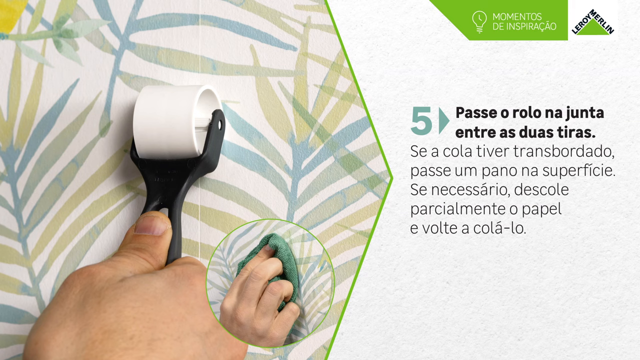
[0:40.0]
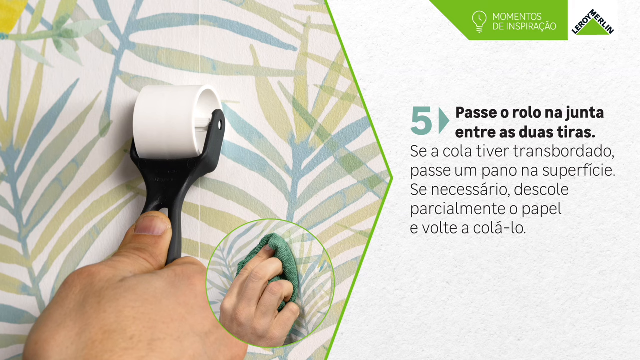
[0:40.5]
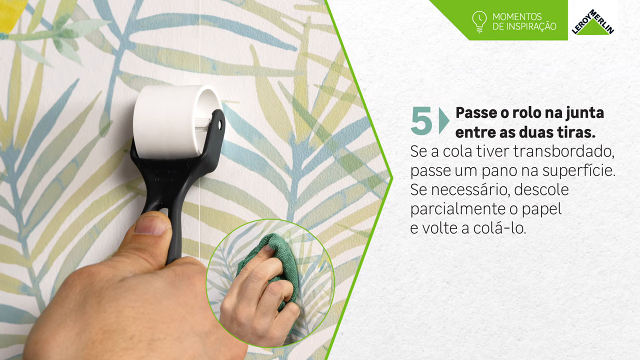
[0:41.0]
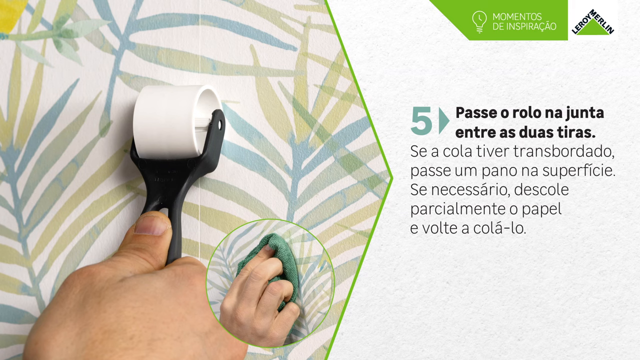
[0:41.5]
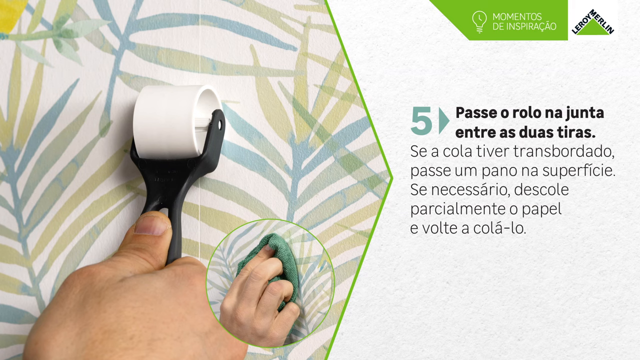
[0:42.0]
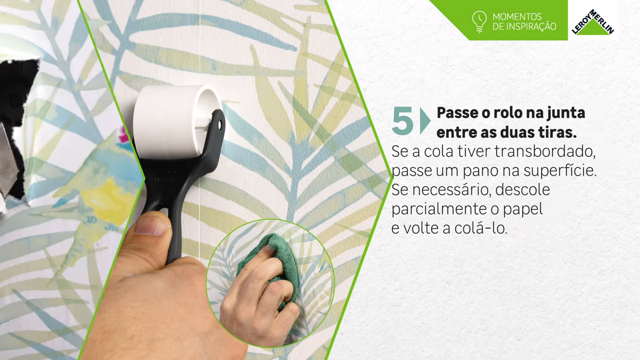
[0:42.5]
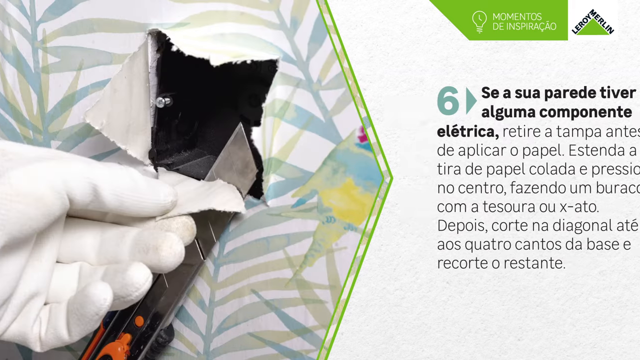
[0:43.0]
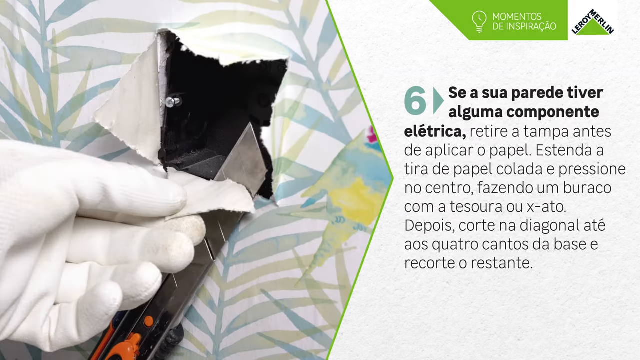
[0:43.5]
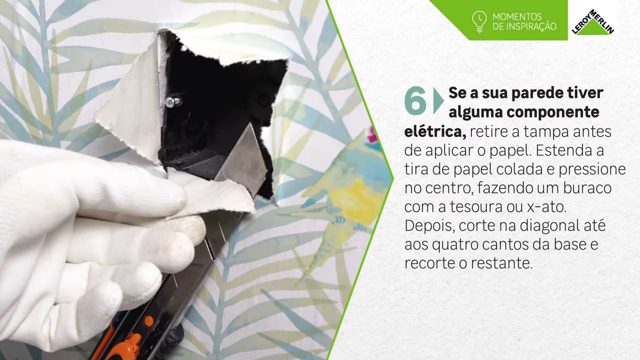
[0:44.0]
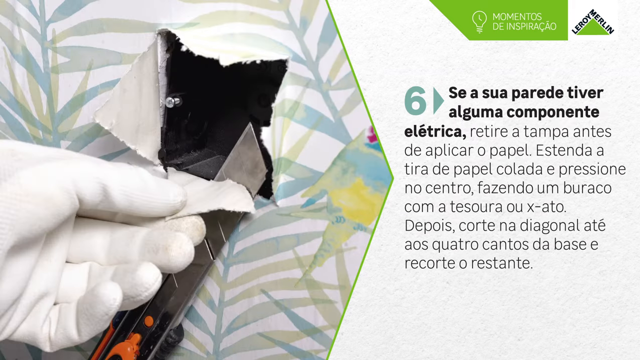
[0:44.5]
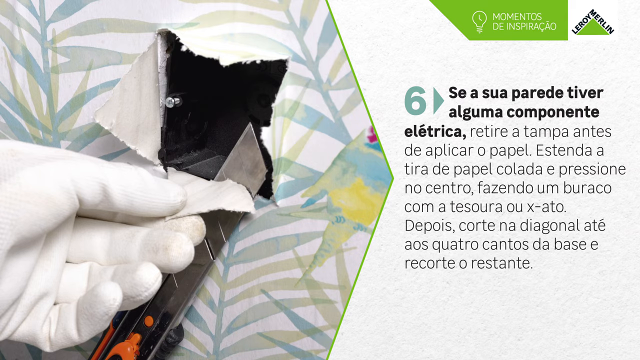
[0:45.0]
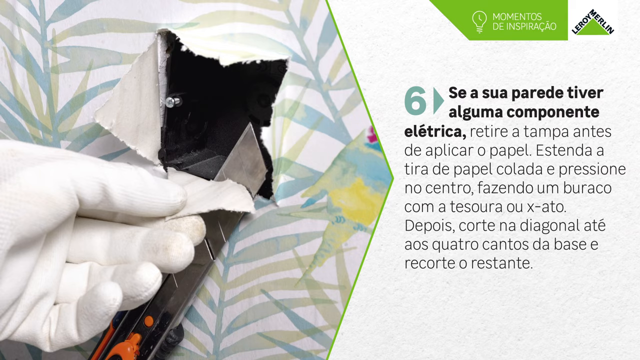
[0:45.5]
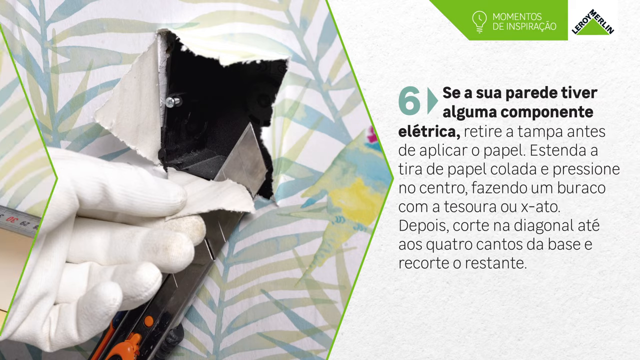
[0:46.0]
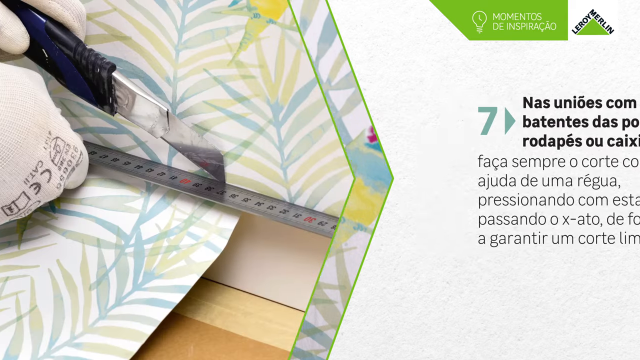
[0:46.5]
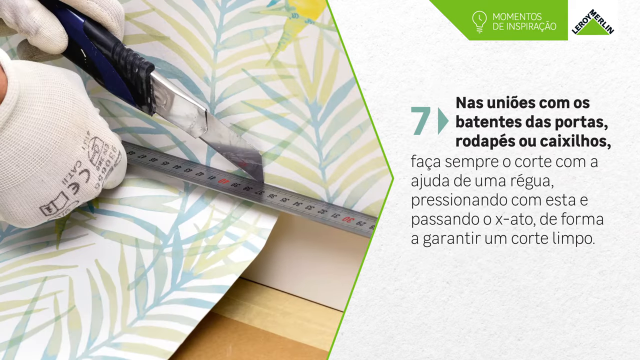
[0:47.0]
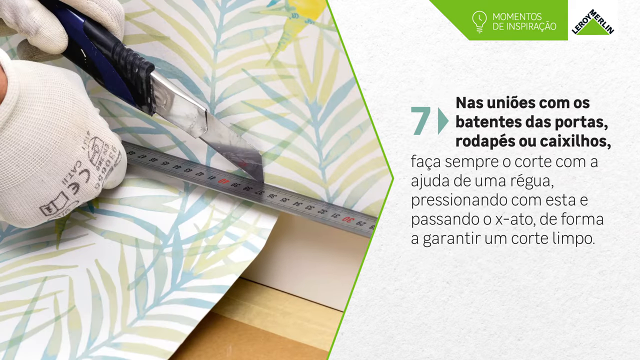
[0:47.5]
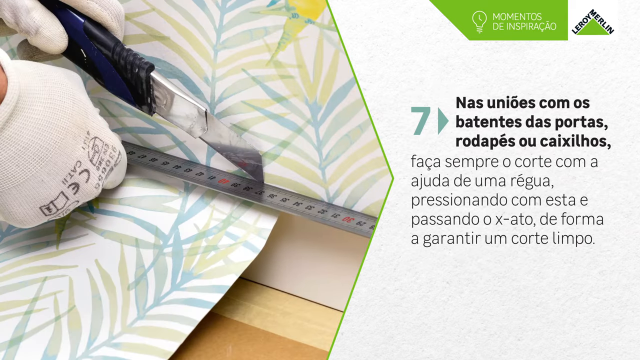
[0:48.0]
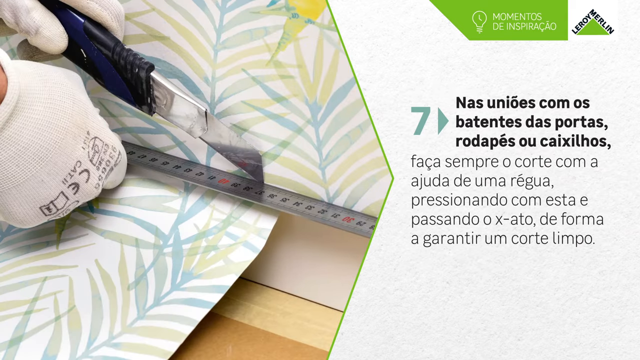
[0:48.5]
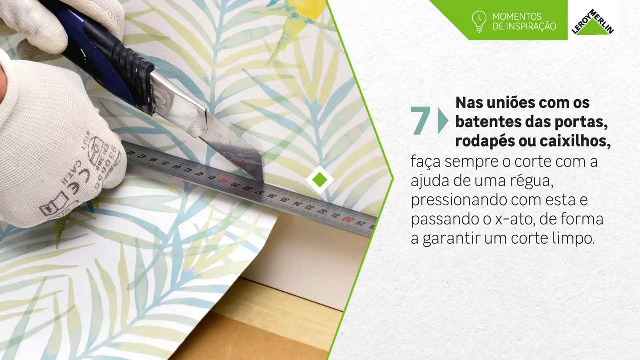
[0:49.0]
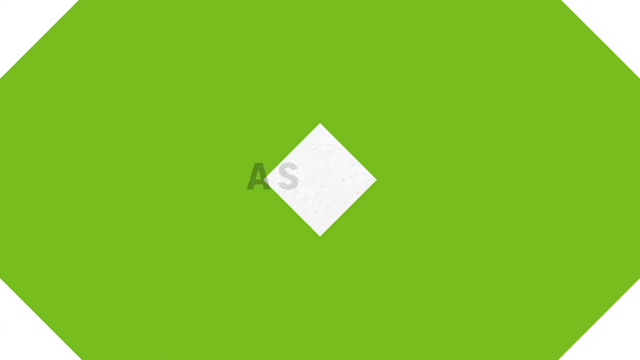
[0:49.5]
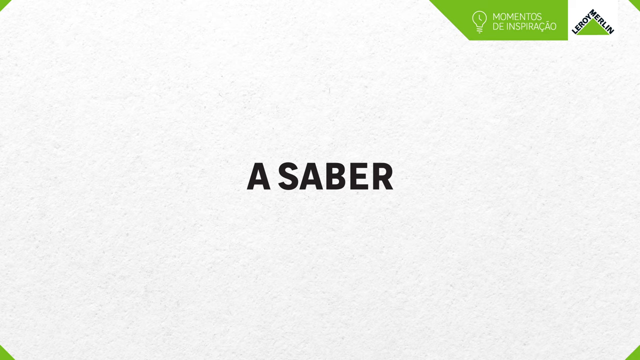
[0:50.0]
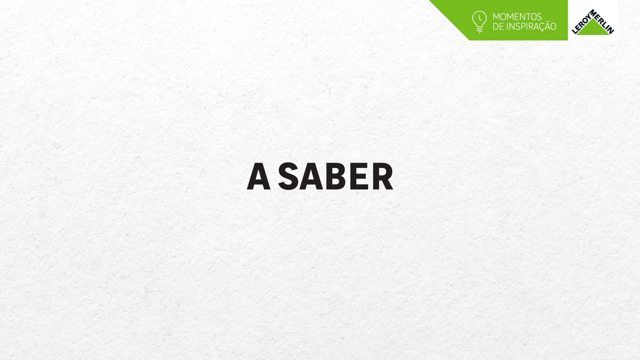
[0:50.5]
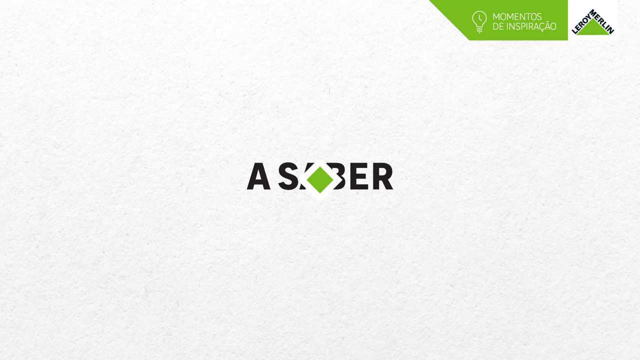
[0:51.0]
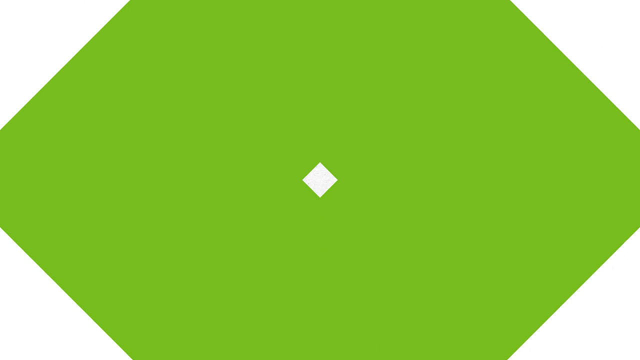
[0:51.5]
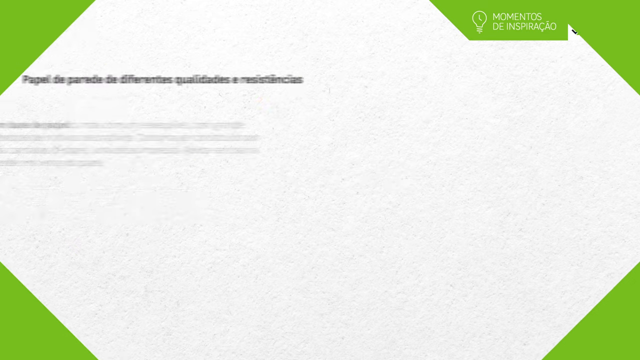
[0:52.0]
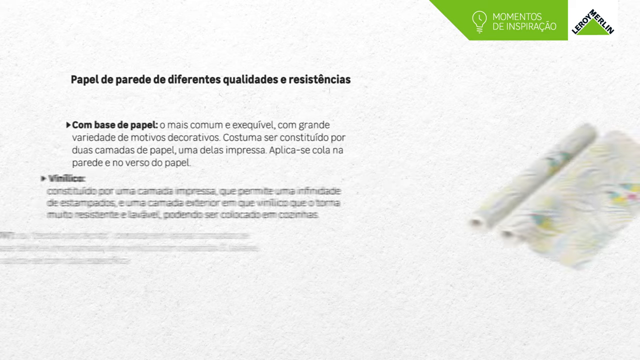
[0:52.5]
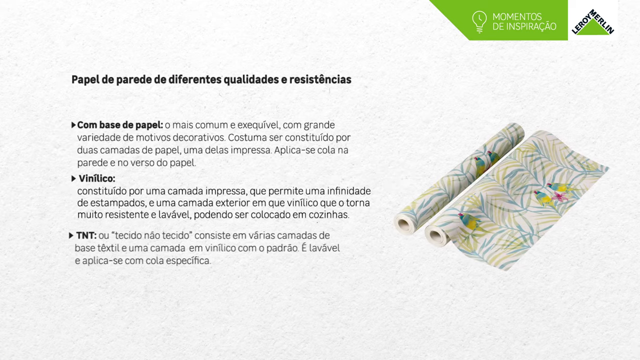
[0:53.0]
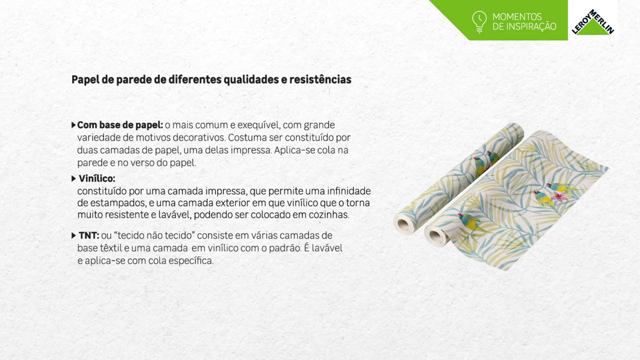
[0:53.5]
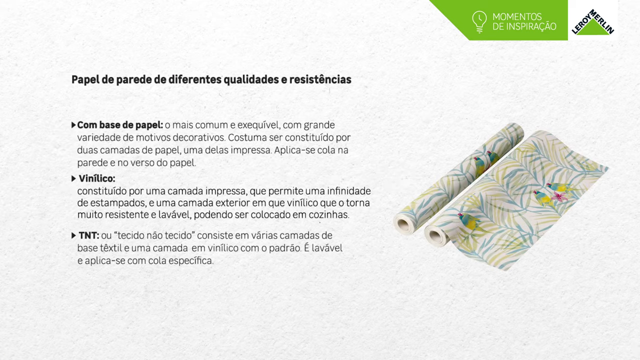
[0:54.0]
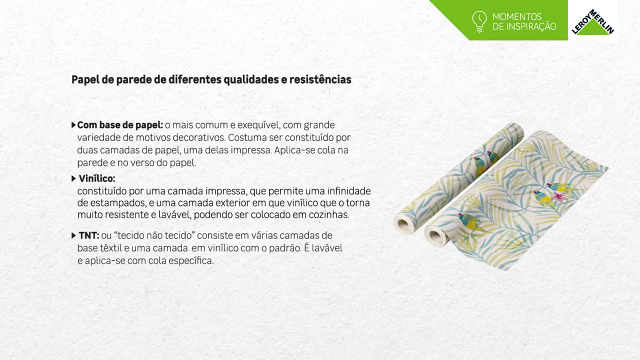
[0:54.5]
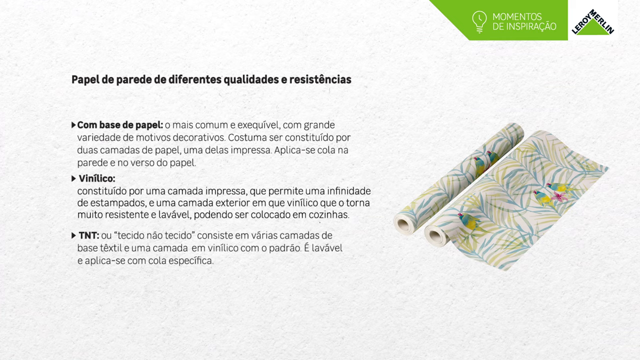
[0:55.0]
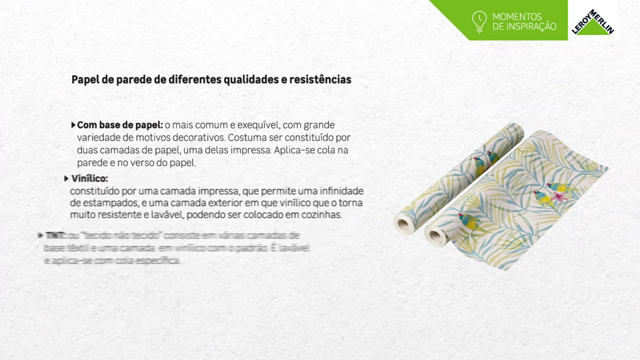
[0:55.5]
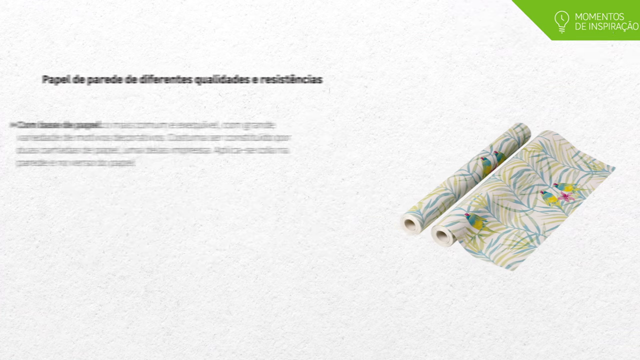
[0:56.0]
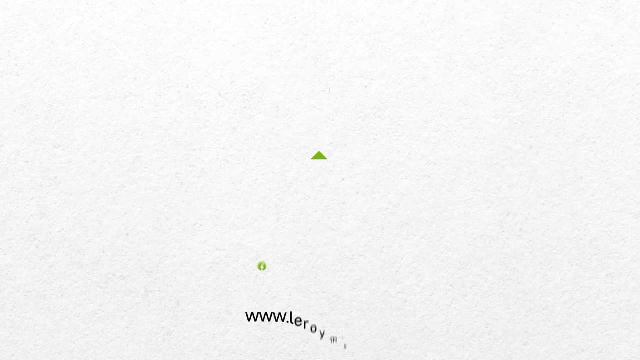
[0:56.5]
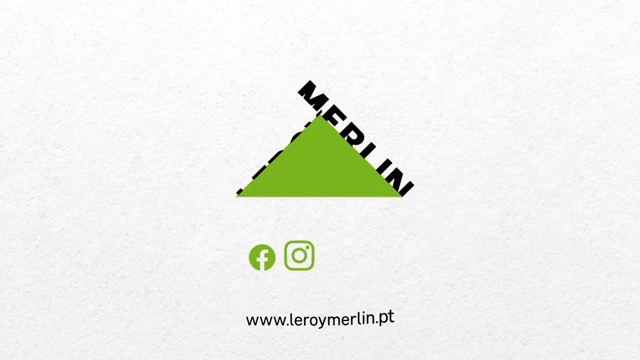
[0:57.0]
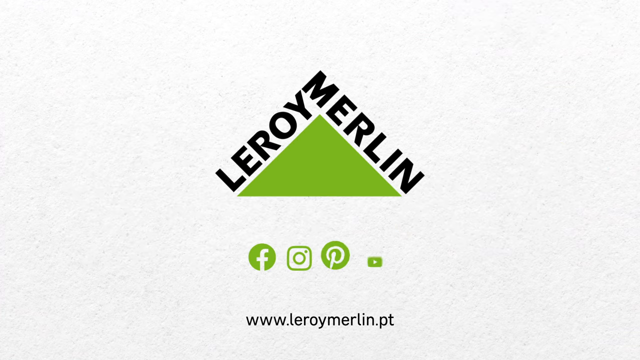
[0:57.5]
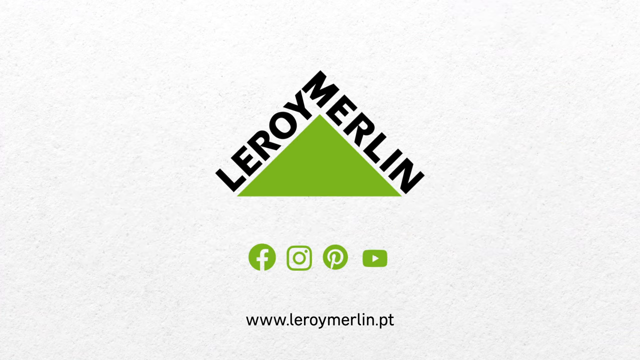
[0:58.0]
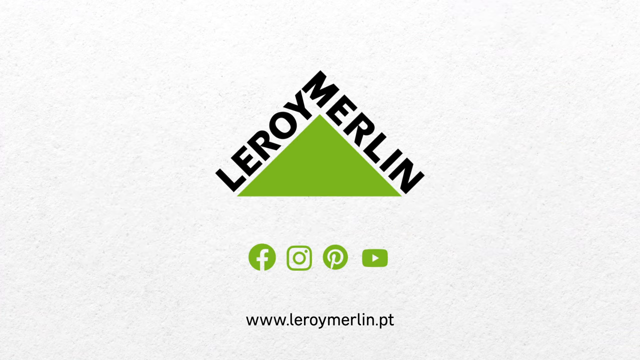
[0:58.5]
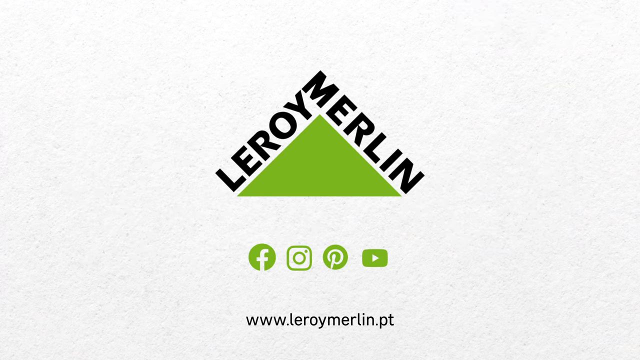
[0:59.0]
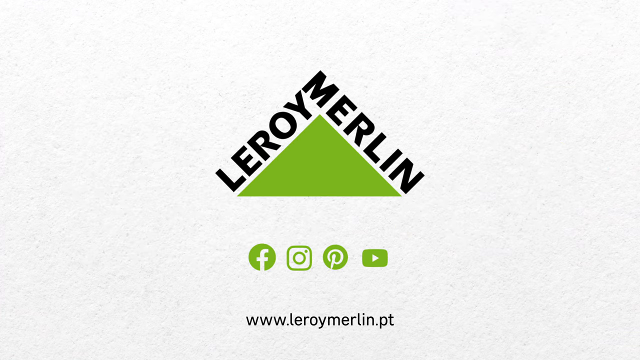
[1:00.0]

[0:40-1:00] A man installing the wallpaper uses the roller and cleans the wallpaper with a rag. Step six is shown in words in Spanish on the right side of the video, with the man working on the wallpaper on the left side. The installer, wearing white gloves, uses an X-Acto knife to poke a square into the wallpaper, possibly where a lighting fixture will go, and then cuts away the excess wallpaper around the hole. In step seven, he lines up a ruler and runs the X-Acto knife against it to trim the wallpaper at the bottom of the wall, above the floor trim. The video then continues with information about the quality of the wallpaper and what type of wallpaper to get.